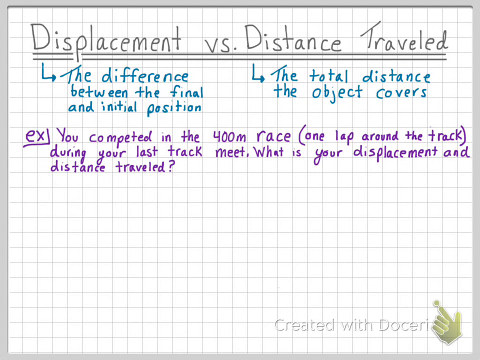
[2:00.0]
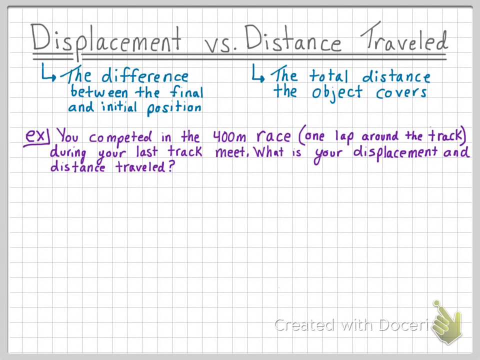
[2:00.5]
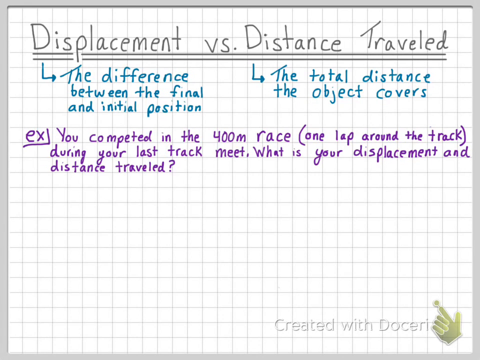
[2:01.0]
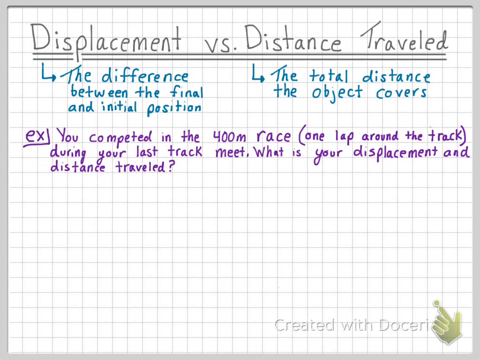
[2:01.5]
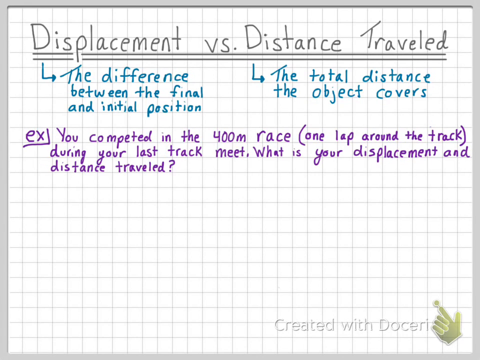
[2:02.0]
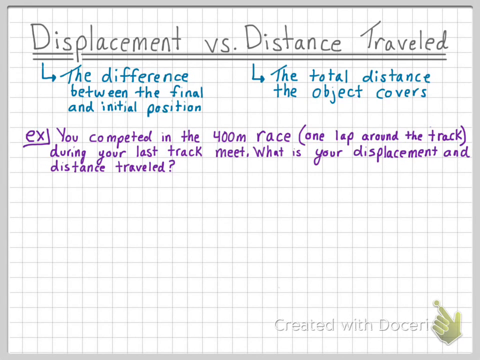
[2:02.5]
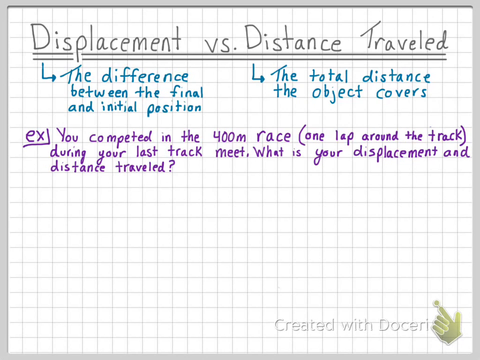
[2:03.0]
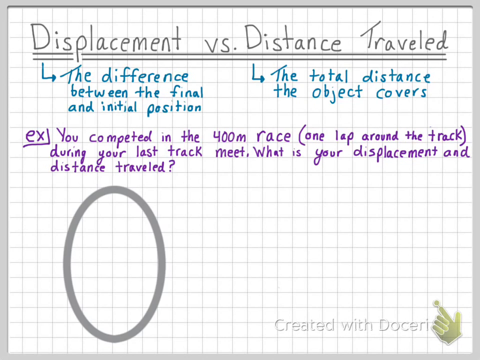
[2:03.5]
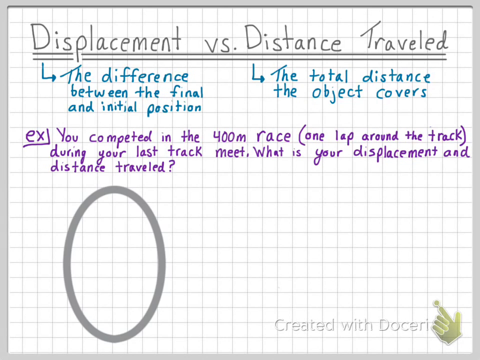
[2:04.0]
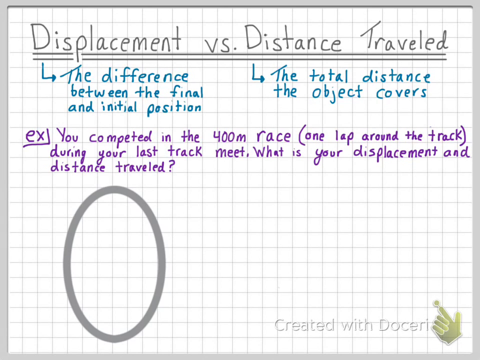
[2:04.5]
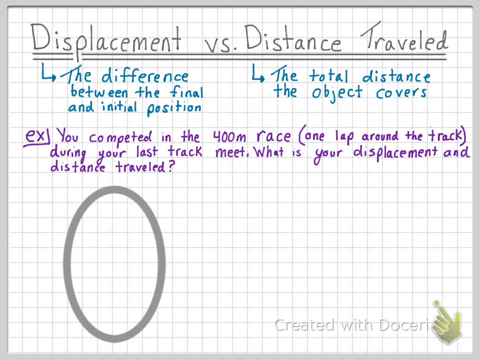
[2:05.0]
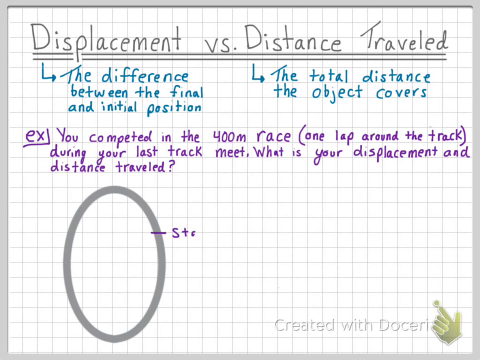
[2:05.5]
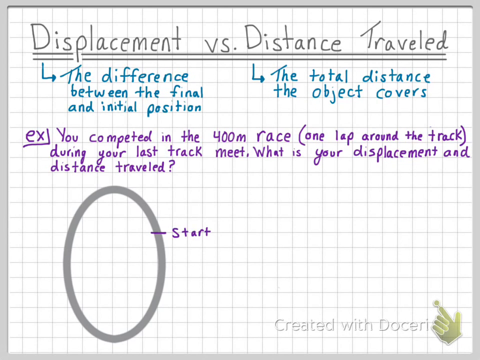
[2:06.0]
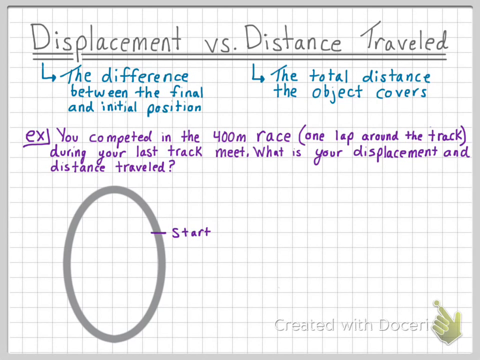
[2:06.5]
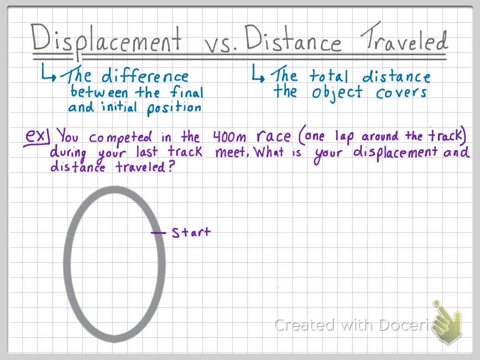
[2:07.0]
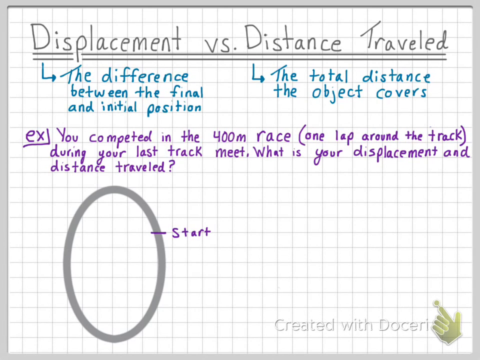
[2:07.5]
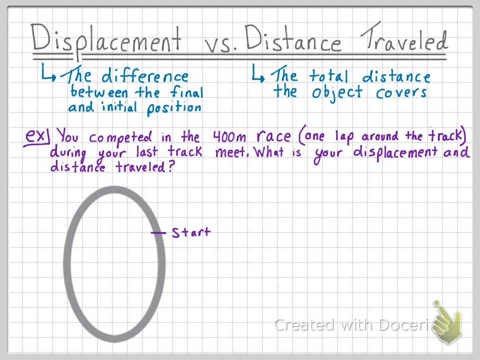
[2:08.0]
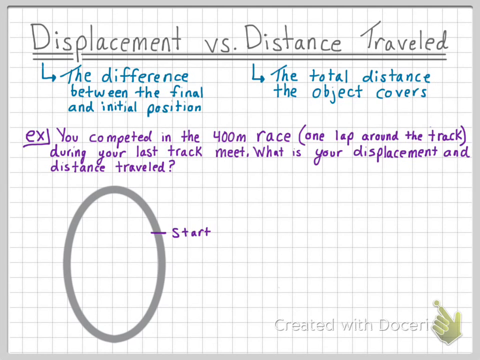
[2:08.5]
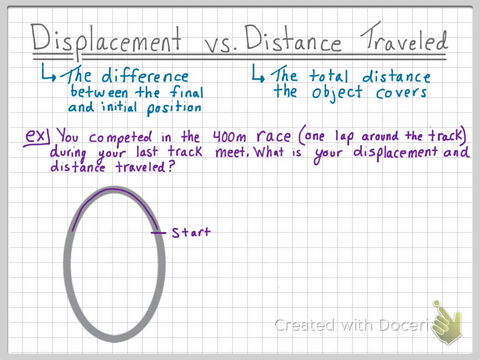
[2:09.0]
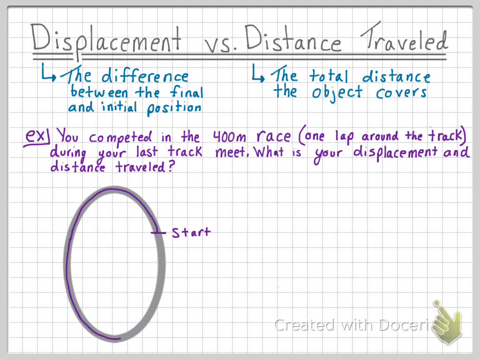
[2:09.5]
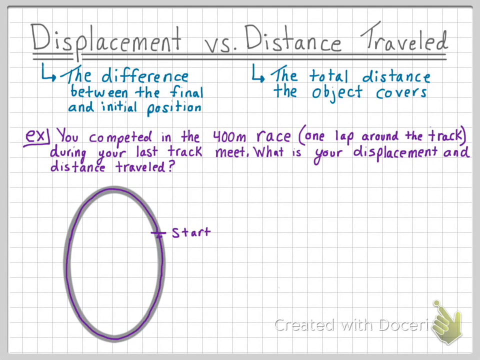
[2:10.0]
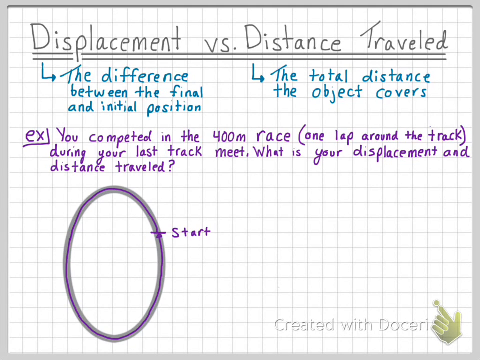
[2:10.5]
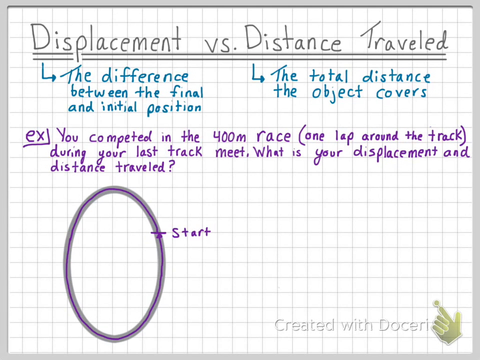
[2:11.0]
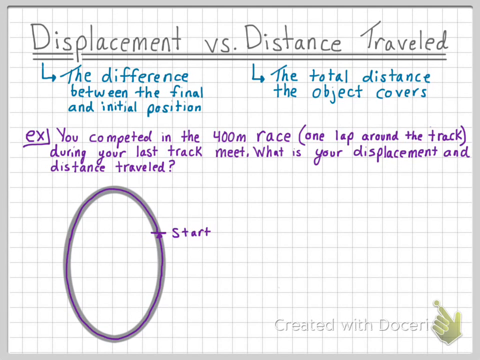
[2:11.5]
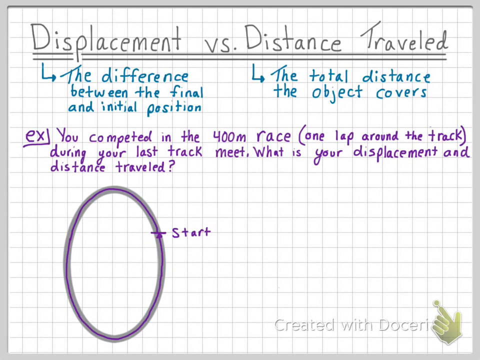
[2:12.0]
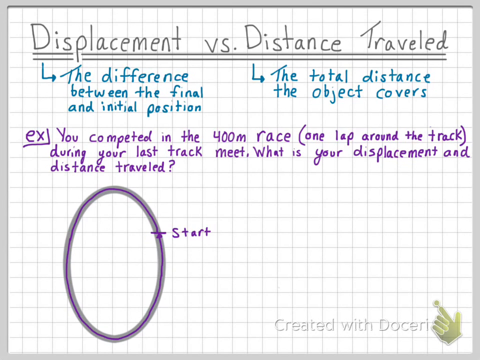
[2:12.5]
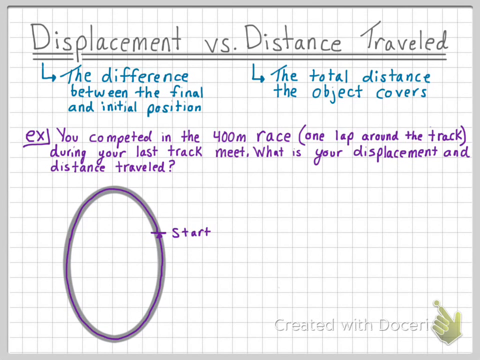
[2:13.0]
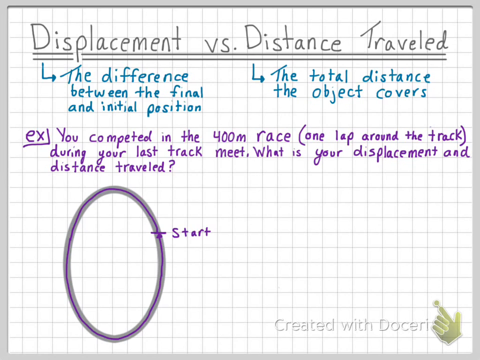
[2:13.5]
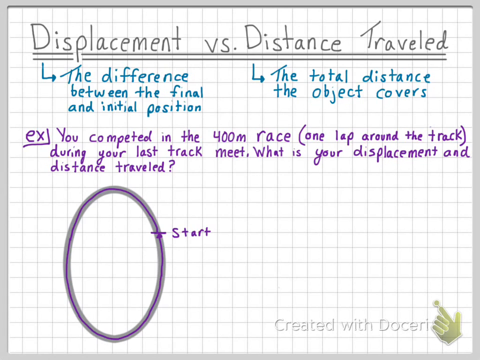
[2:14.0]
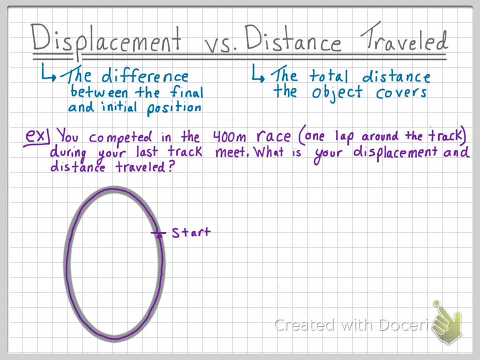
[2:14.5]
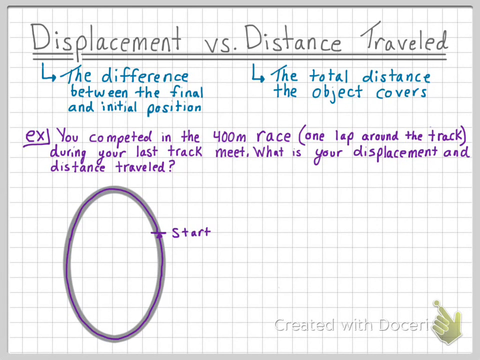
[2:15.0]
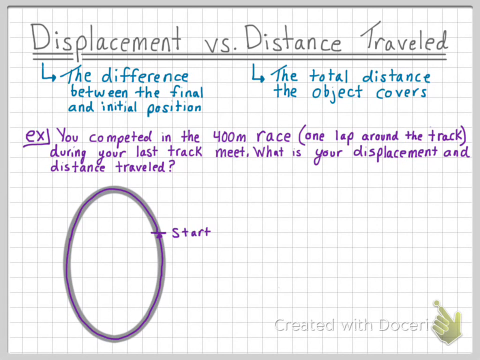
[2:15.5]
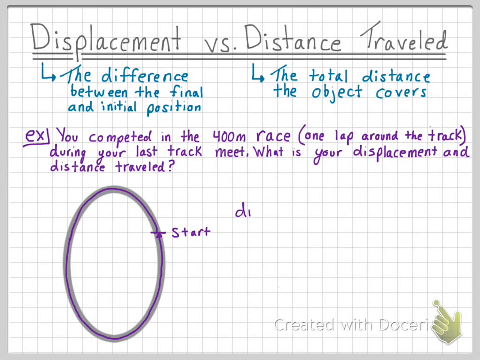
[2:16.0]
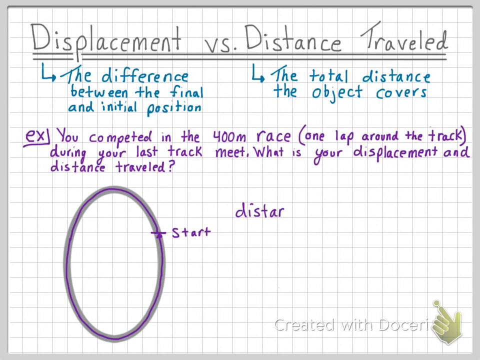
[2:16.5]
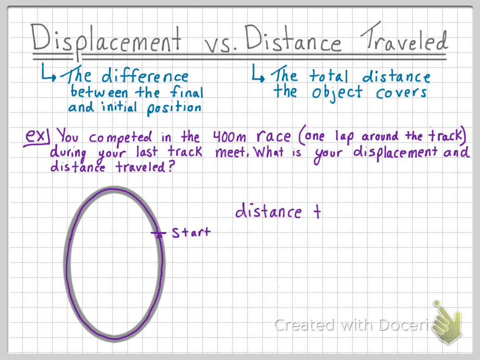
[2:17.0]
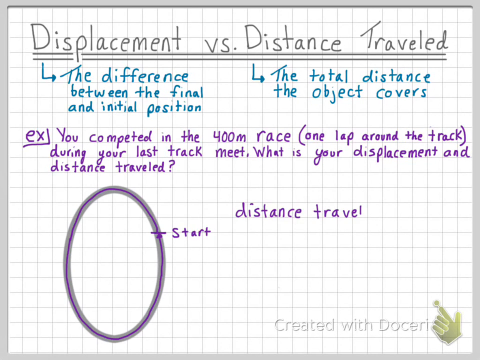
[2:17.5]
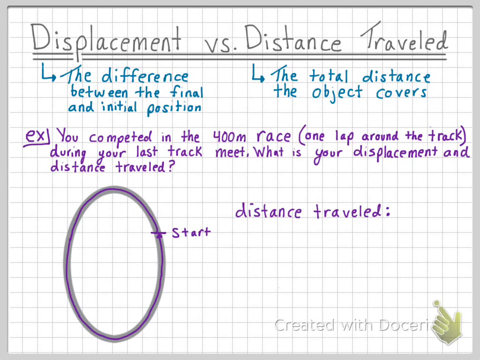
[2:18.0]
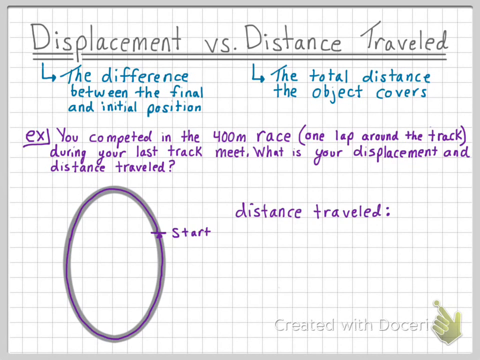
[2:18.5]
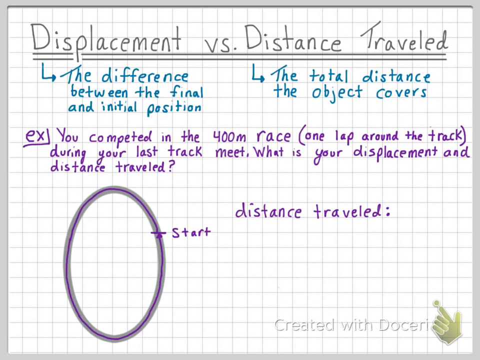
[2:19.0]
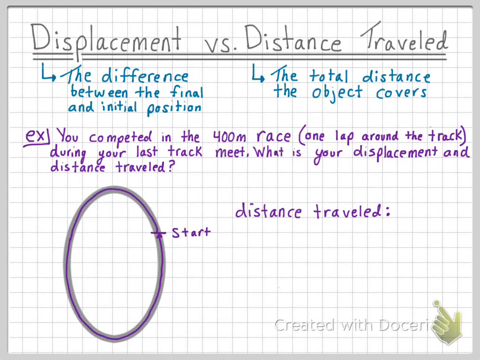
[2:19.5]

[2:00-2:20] The board still shows the title "Displacement versus Distance Traveled", underlined twice, with the definitions underneath written in blue, and the purple example about running a 400 meter race. A gray oval track is drawn, with a starting line drawn in purple labeled "start". A purple line is traced around the track, representing running around it. Then "distance traveled" is written. The watermark of a hand pointing at a dot remains in the bottom corner and reads "created with Doceri".